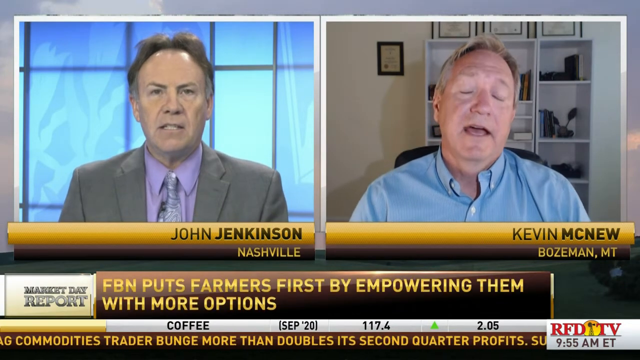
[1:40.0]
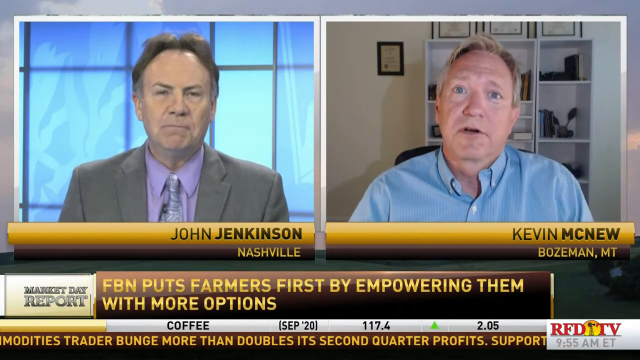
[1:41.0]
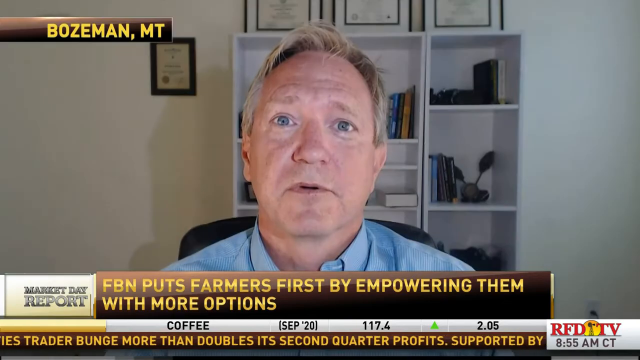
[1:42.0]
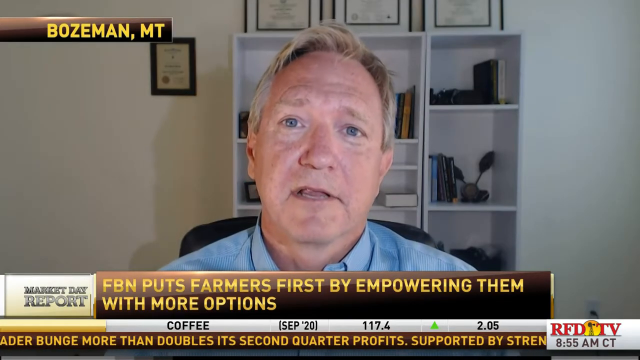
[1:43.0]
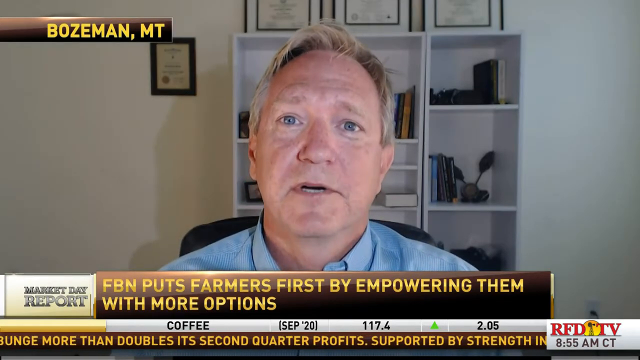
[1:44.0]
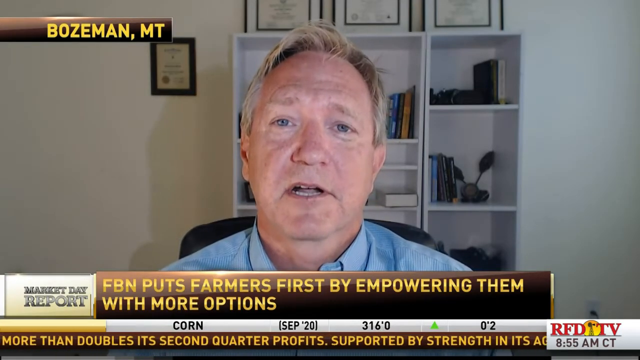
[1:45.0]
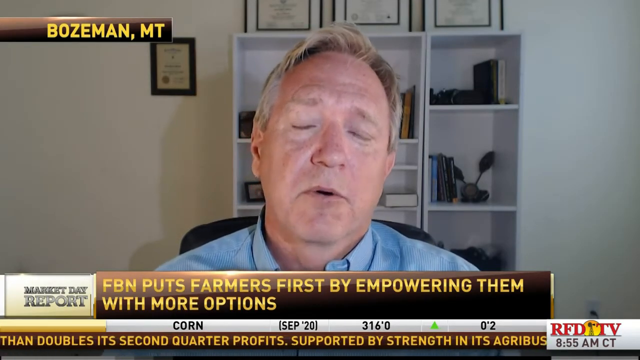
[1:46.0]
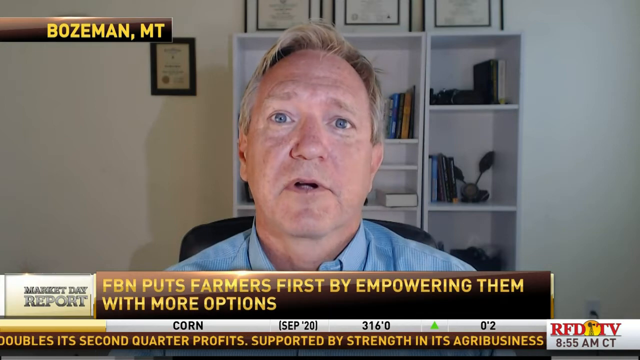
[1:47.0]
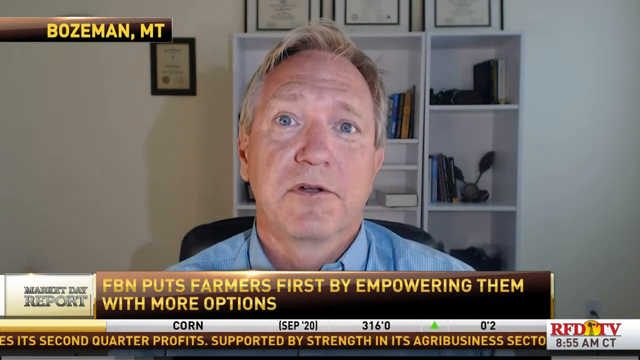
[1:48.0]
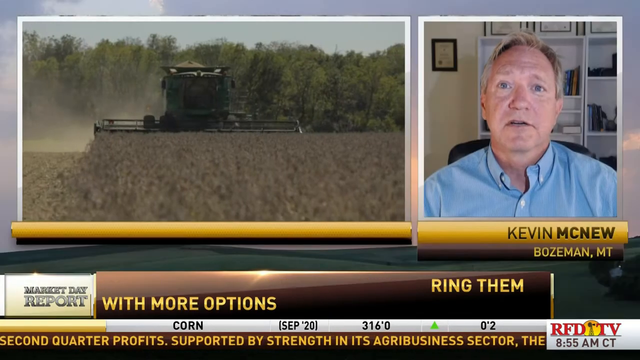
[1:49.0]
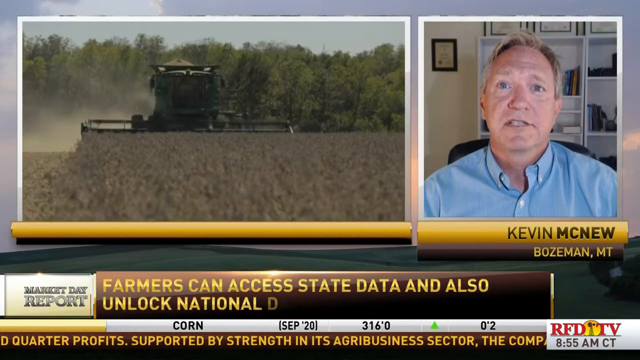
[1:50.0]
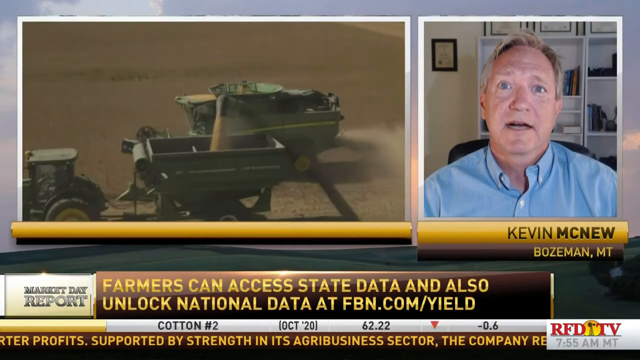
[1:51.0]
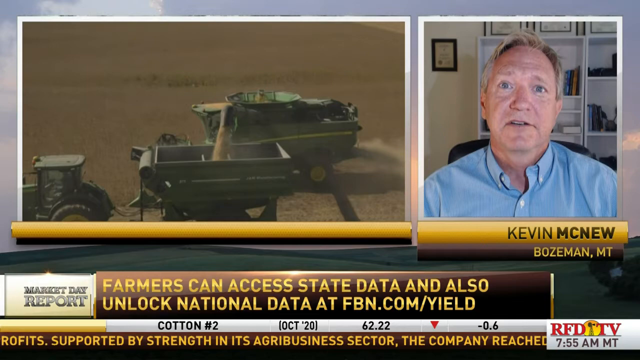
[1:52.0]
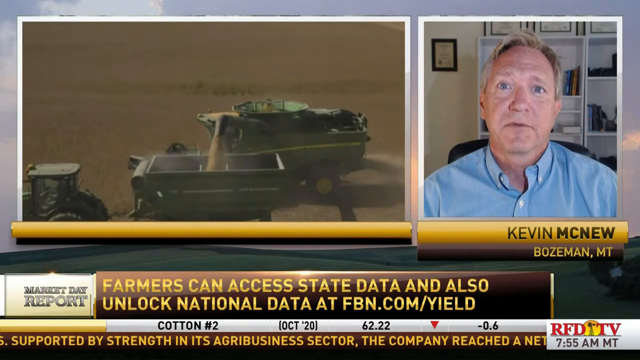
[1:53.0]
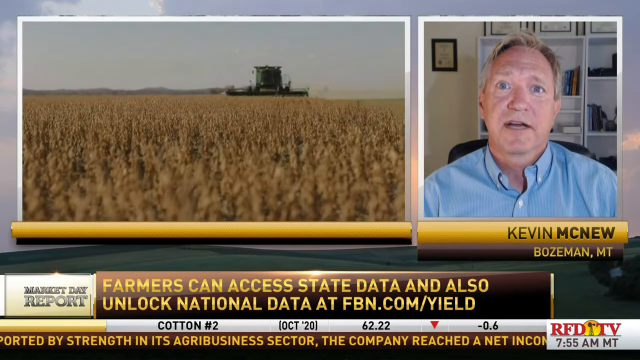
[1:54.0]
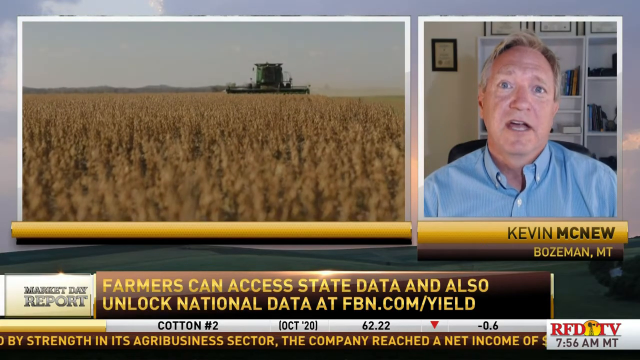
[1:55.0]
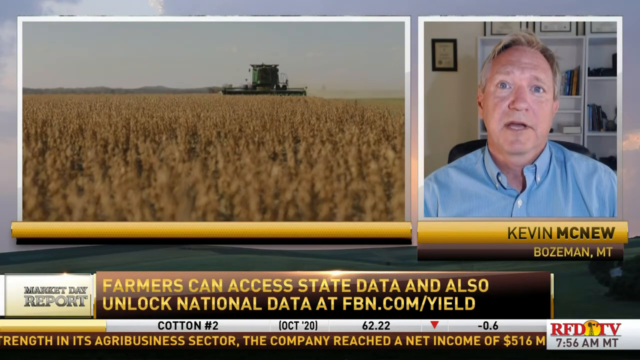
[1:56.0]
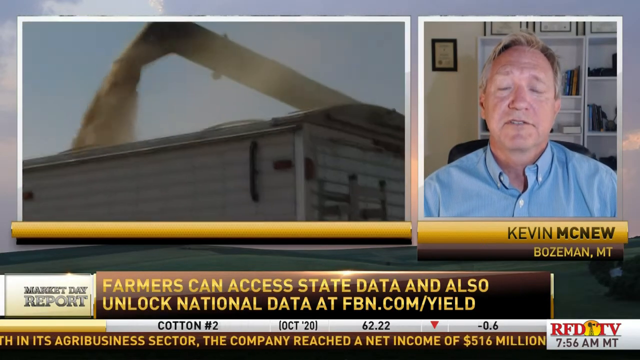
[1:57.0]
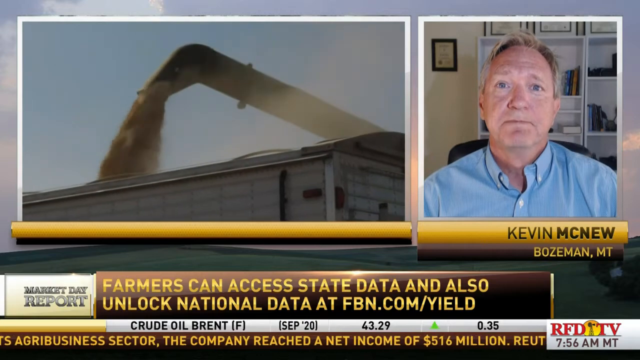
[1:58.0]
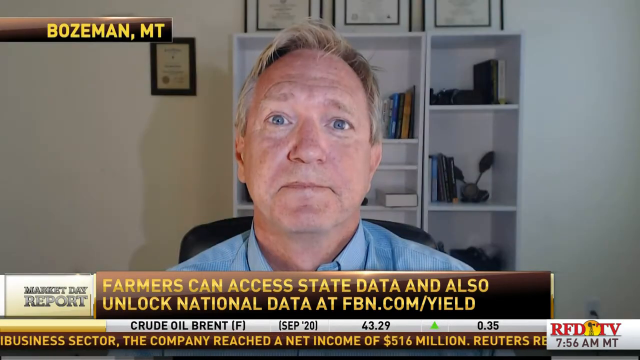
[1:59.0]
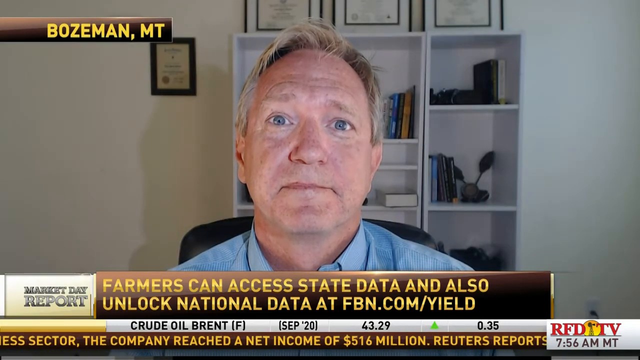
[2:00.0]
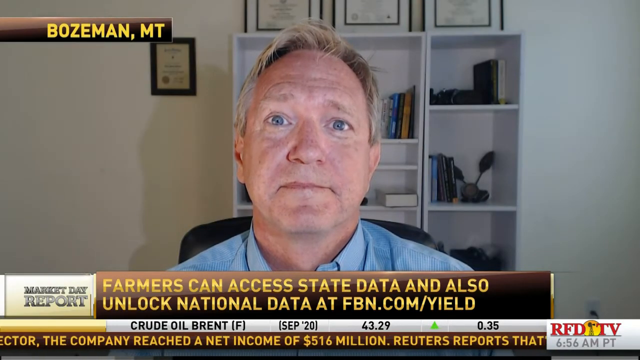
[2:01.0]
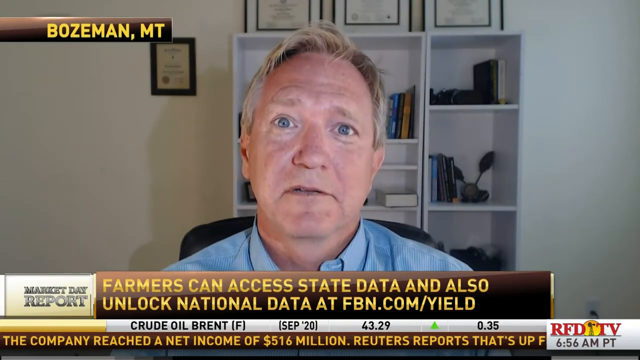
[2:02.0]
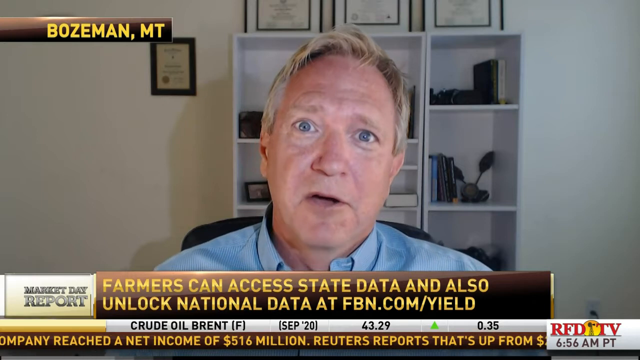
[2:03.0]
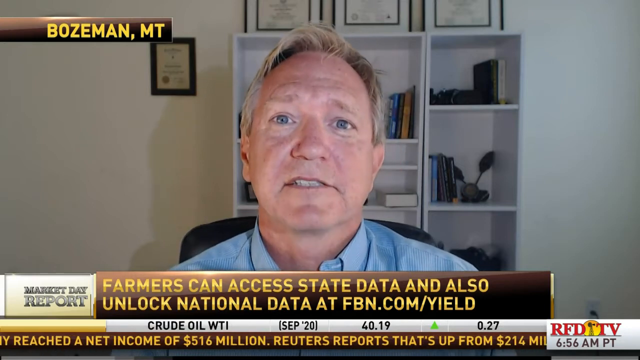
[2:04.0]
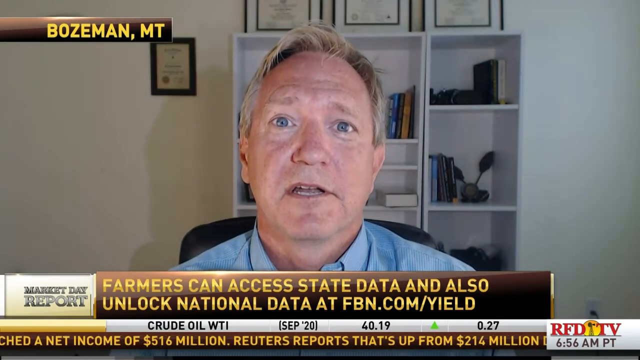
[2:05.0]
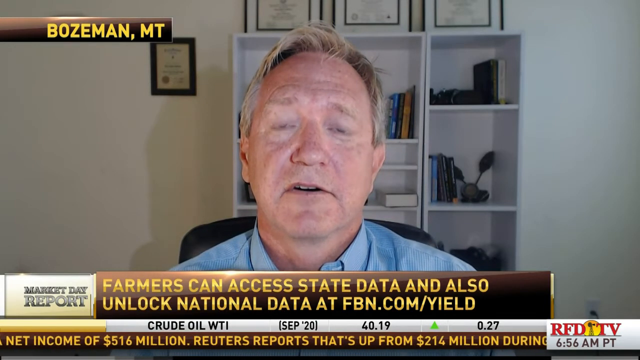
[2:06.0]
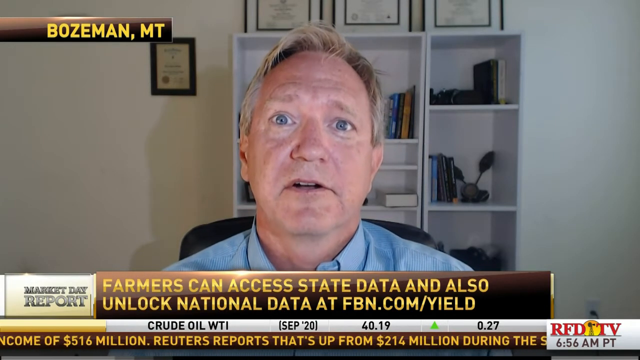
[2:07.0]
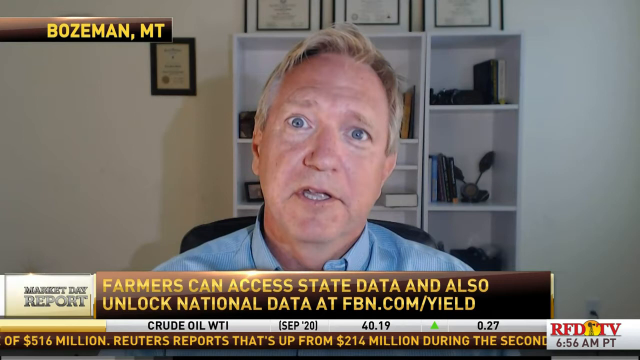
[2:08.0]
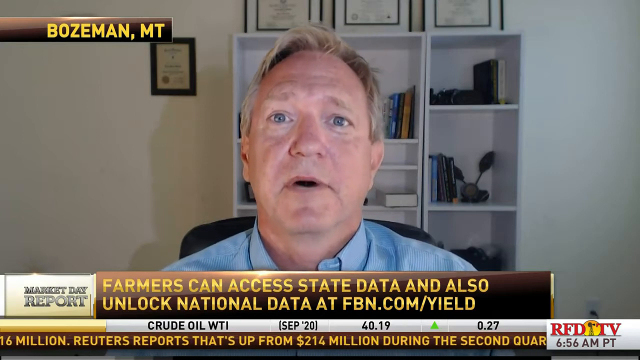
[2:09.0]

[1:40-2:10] Text reads "FBN puts farmers first by empowering them with more options," and the video is a market day report. The two reporters are John Jenkins, Nashville, a white man with dark hair in a suit and tie, and Kevin McNeil from Bozeman MT, in a light blue shirt, with a shelf behind him containing some books and three or four awards on top. Text also reads "farmers can access state data and also unlock national data at FBN". Tractors move across the field cultivating the crops.